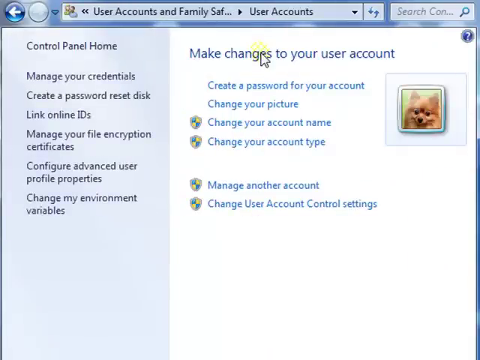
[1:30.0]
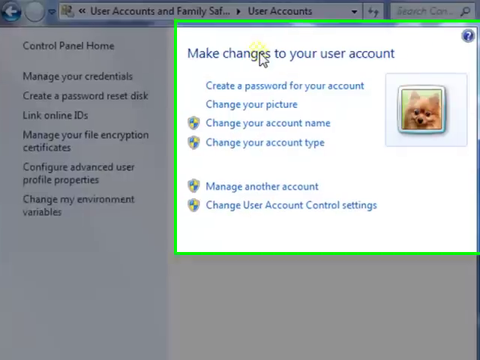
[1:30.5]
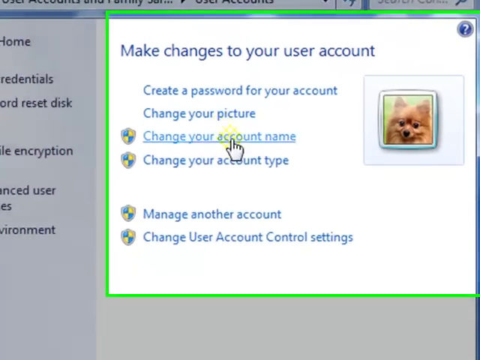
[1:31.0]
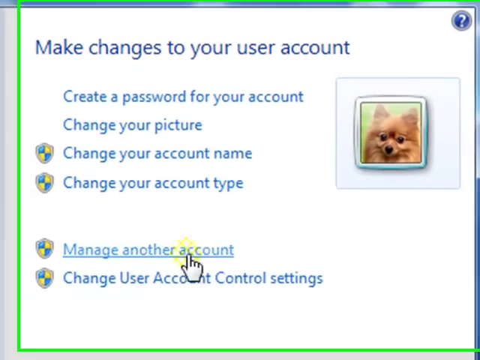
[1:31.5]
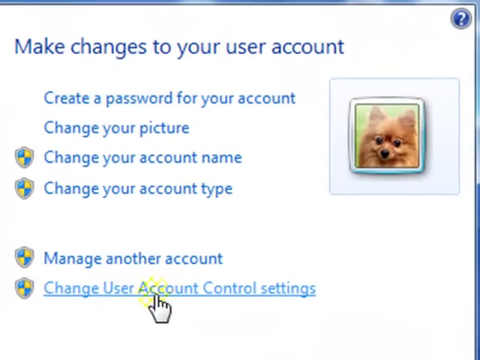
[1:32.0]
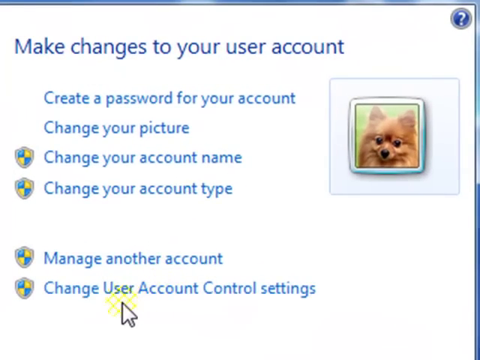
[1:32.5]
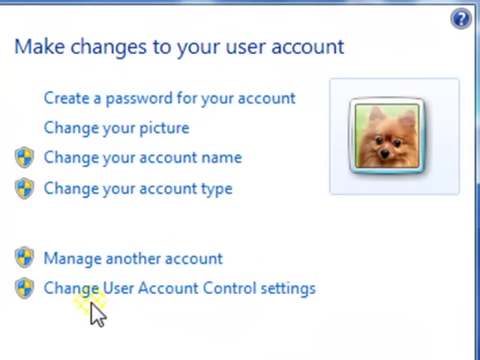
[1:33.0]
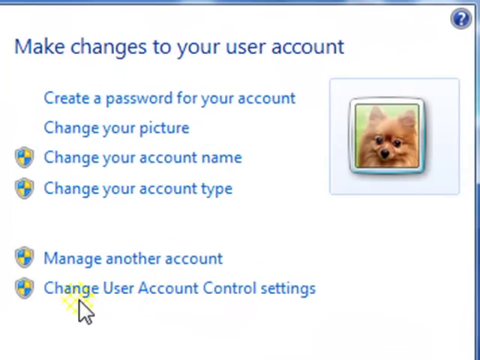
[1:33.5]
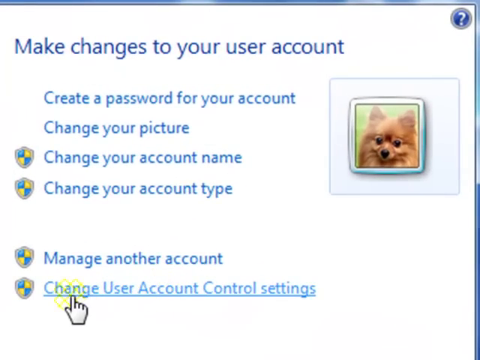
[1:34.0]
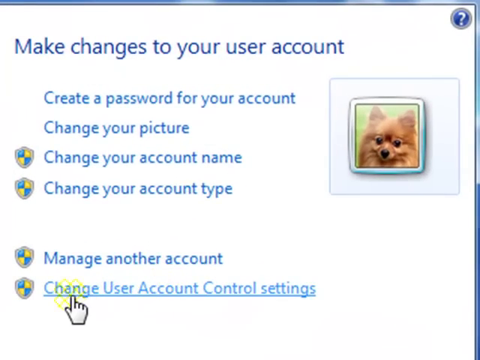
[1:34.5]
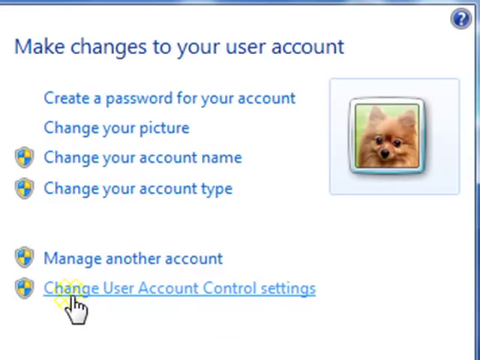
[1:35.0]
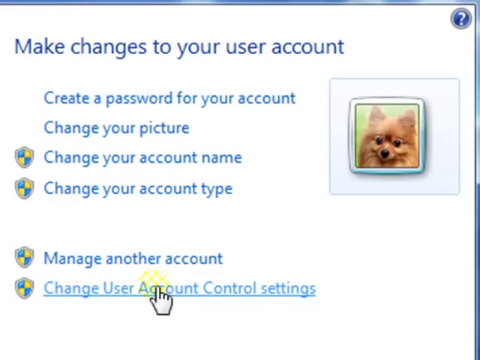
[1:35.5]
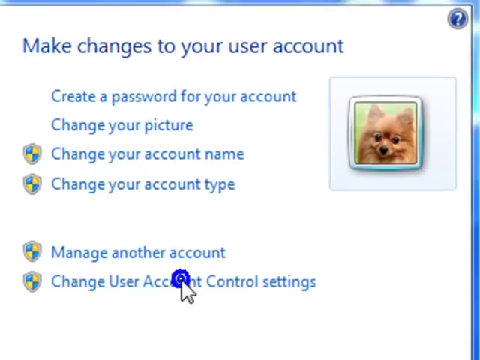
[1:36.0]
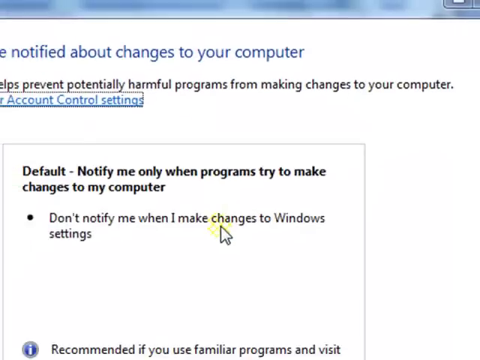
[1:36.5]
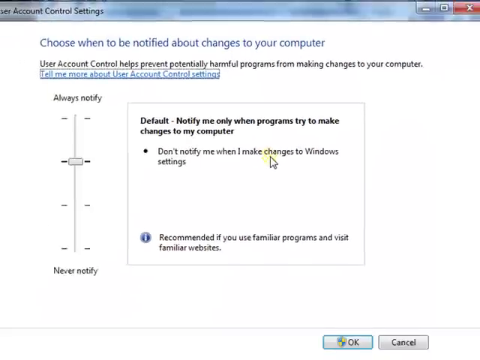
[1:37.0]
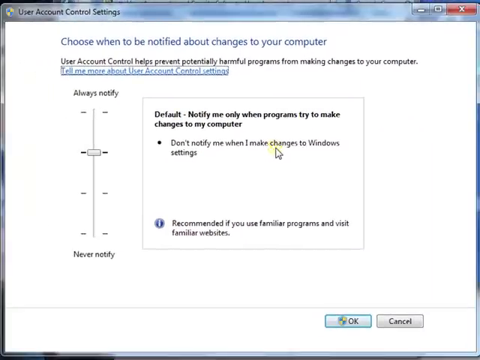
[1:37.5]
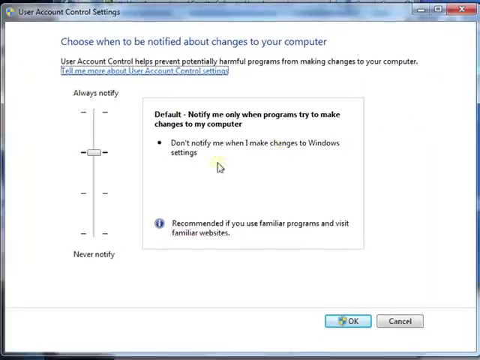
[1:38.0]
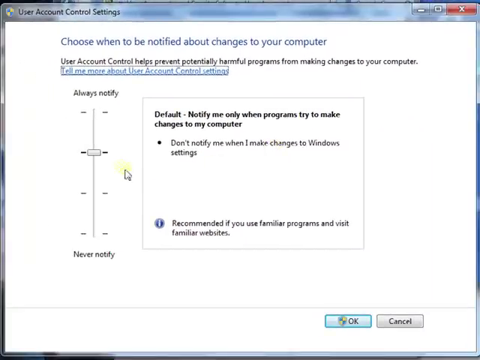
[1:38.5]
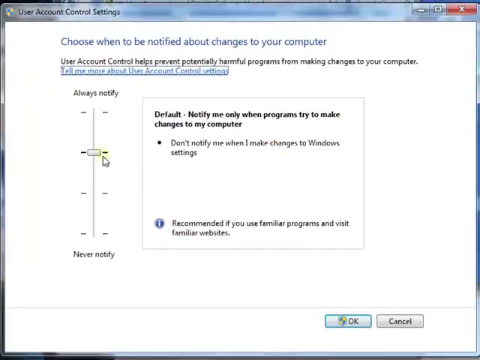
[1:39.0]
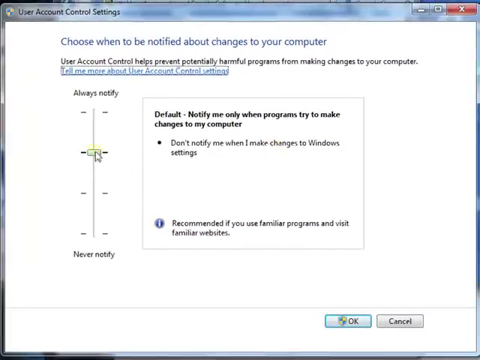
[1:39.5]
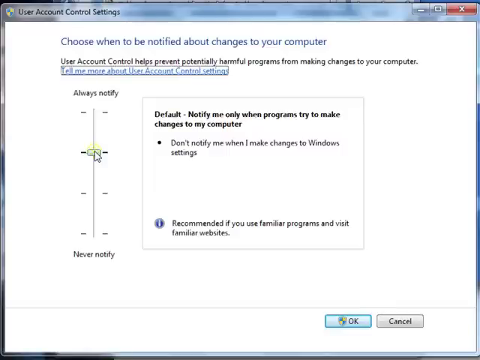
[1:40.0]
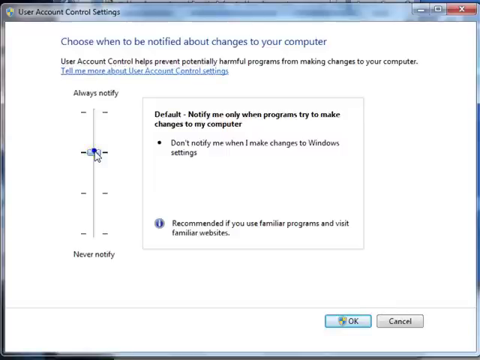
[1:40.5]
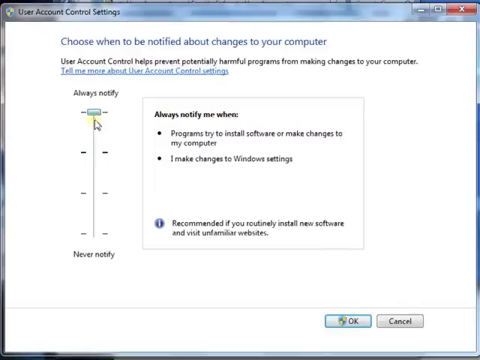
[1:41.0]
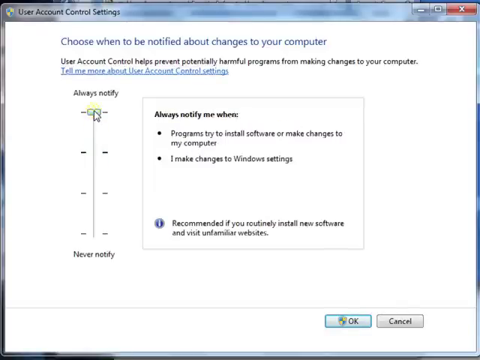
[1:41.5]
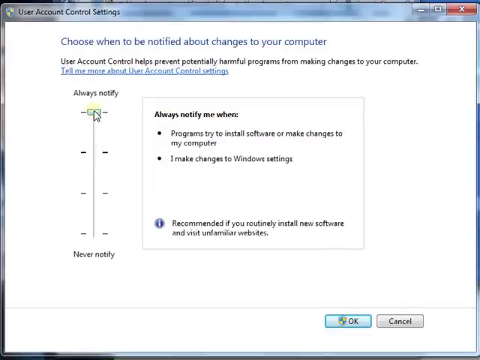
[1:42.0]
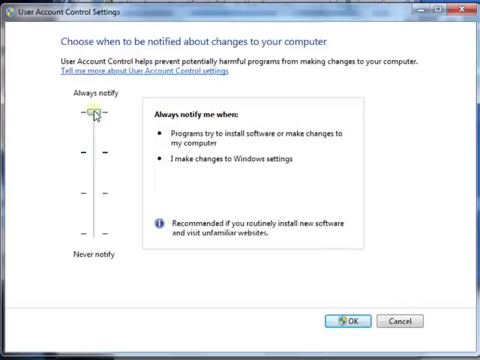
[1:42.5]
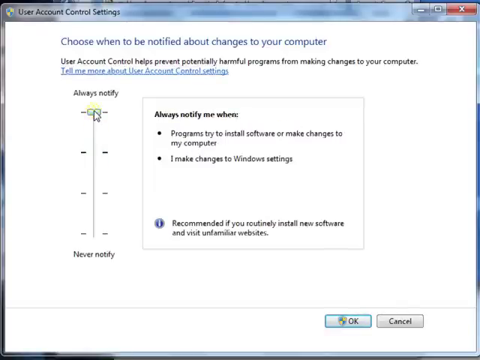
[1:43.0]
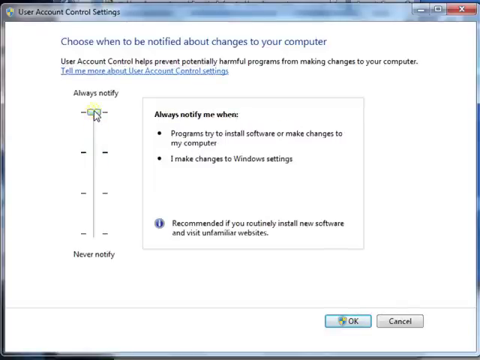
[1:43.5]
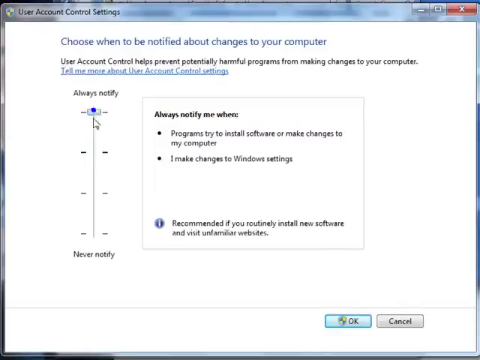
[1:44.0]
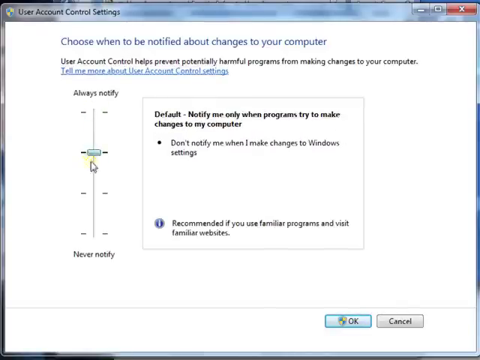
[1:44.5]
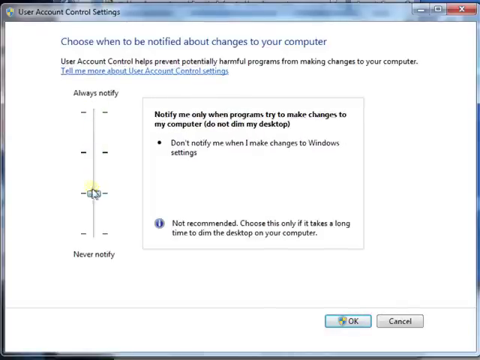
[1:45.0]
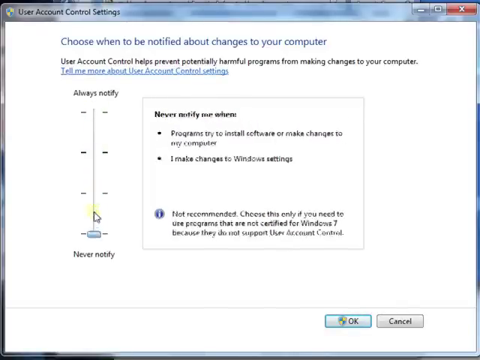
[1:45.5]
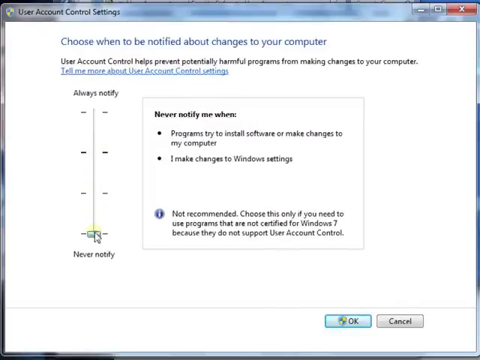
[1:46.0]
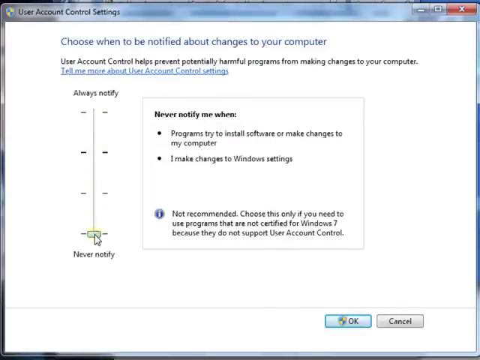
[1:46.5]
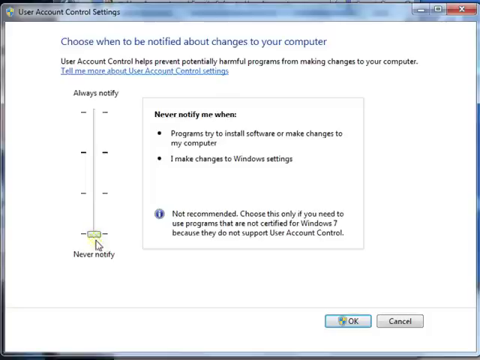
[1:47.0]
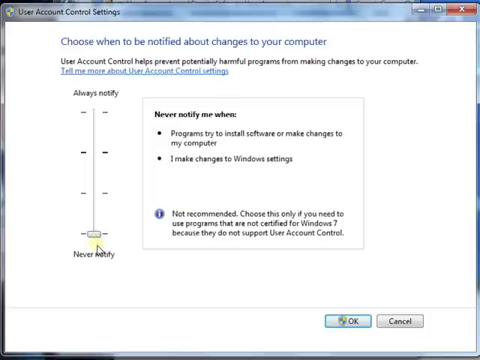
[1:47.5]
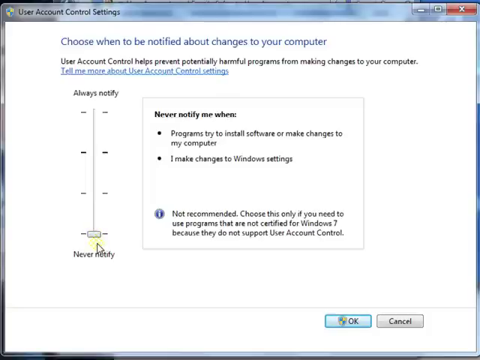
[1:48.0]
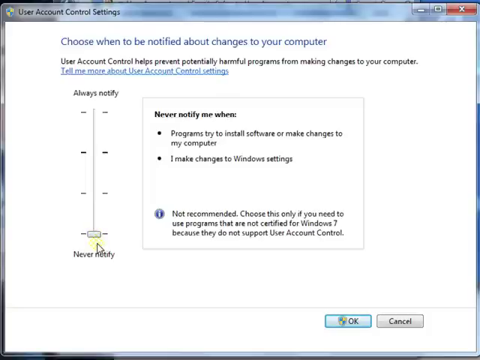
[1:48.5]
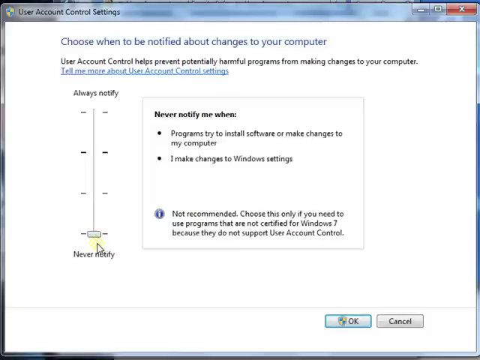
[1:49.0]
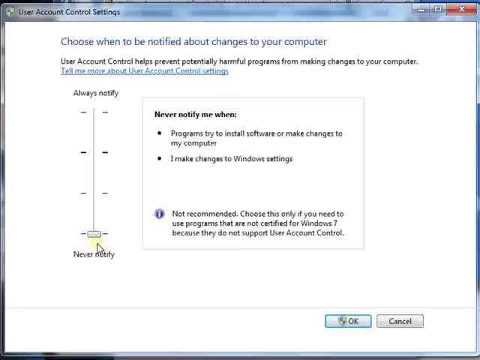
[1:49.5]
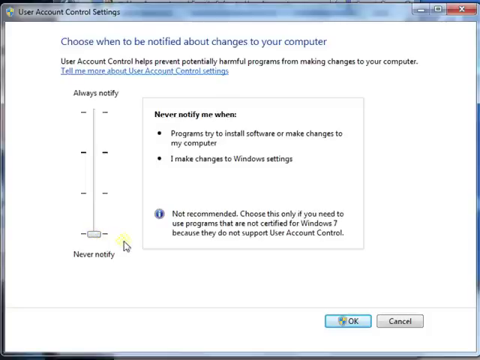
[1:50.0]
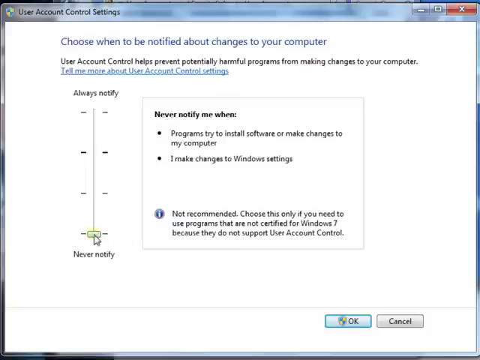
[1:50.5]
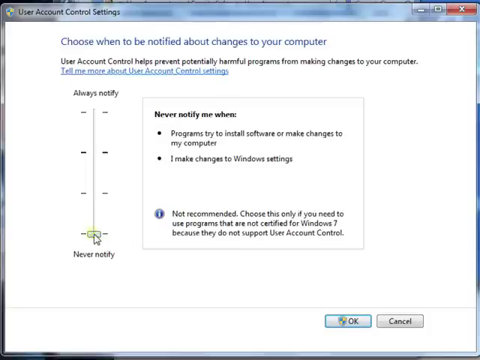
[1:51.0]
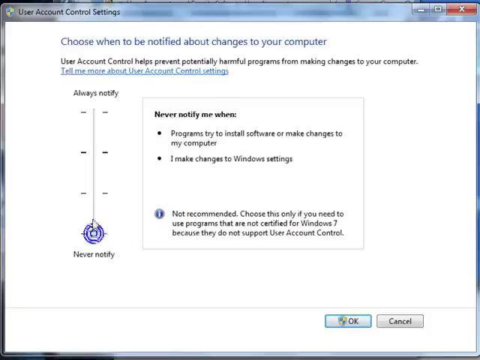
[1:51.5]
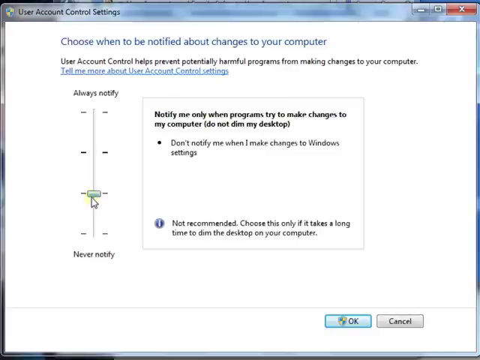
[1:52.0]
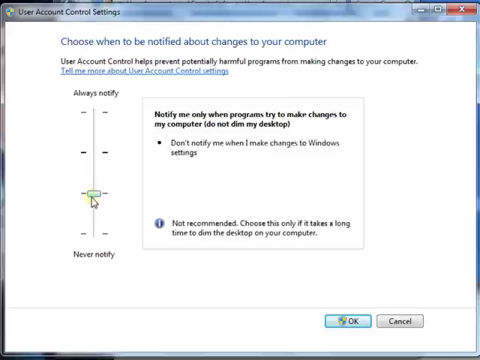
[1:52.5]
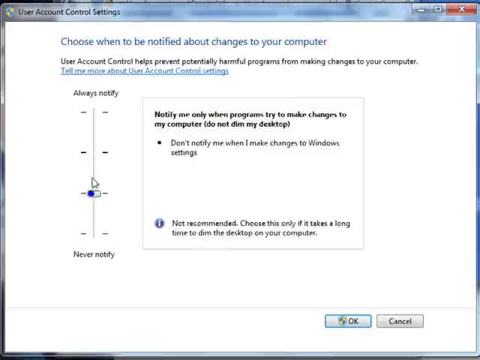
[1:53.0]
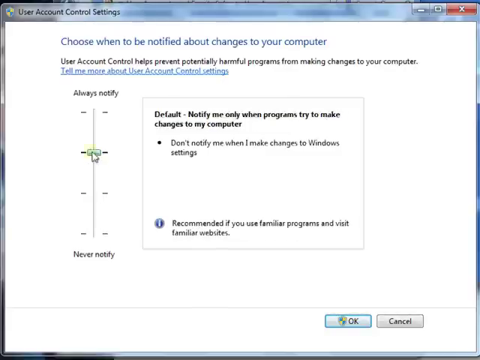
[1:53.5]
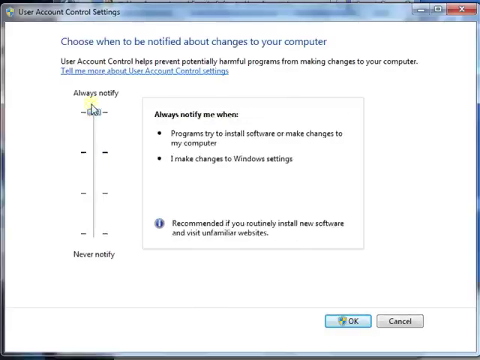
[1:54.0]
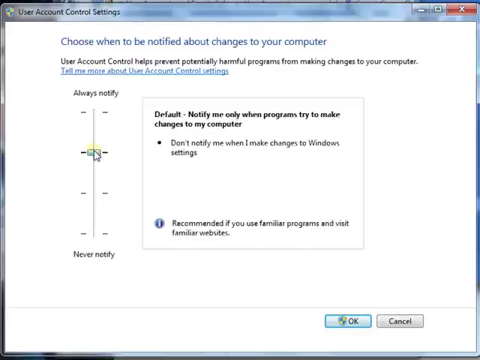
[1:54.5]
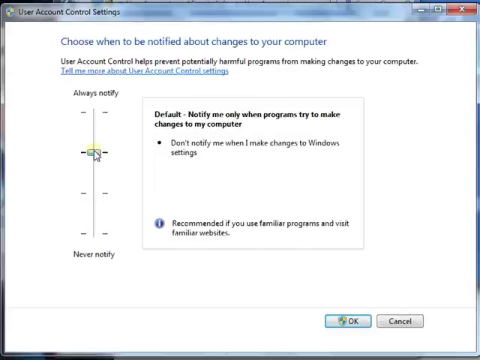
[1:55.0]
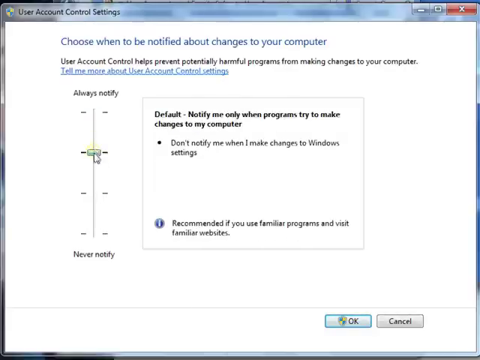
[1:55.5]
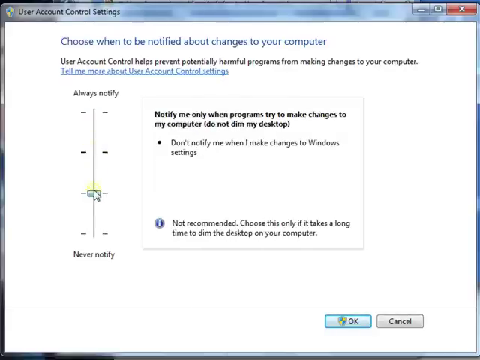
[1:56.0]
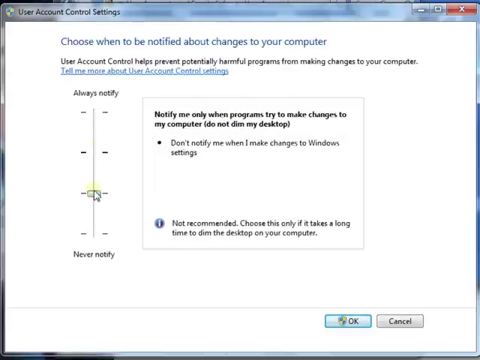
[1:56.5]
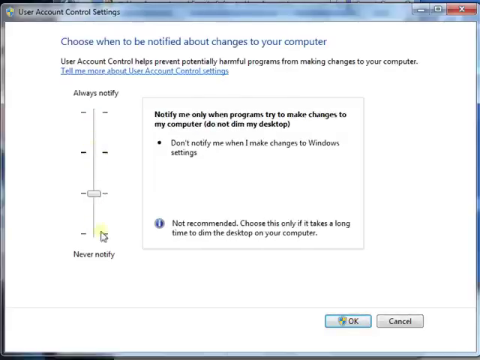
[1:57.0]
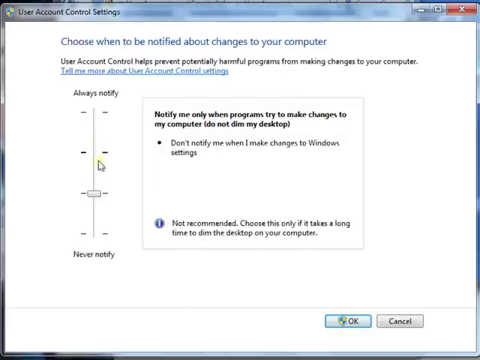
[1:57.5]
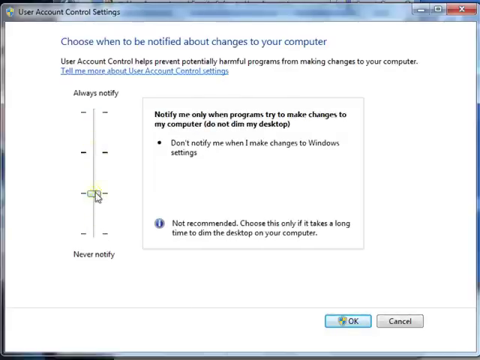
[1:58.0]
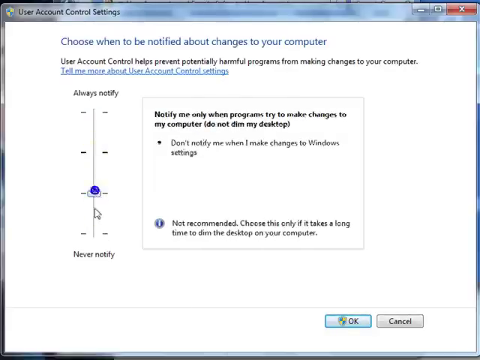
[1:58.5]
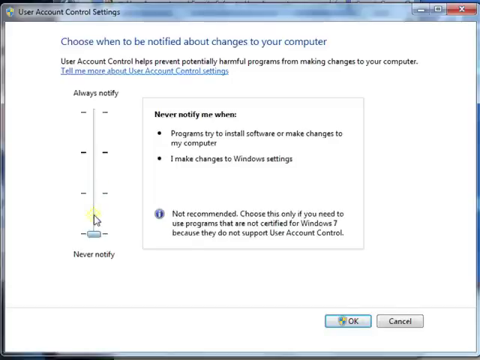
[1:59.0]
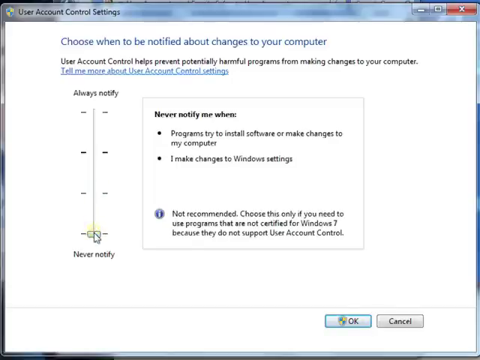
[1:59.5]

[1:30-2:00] The user accounts and family safety page is shown, with the right-hand side highlighted where it says "make changes to your user account", listing create a password for your account, change your picture, change your account name, change the account type, manage another account, and change user account control settings. A picture of a dog is on the right-hand side, apparently a generic Windows stock photo. The view looks down at change user account control settings, which is apparently clicked, leading to "choose to be notified about changes to your computer". A slider on the left-hand side runs from always notify at the top down to never notify. The person moves it all the way up to always notify, then all the way down to never notify, and text on the right-hand side changes to explain what each setting does. They slide it all the way back up, then down one notch, then down two, then move the mouse quickly up and down, then go back down and finally up one notch from never notify.